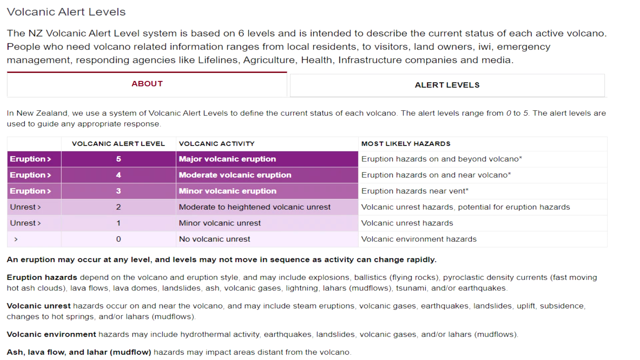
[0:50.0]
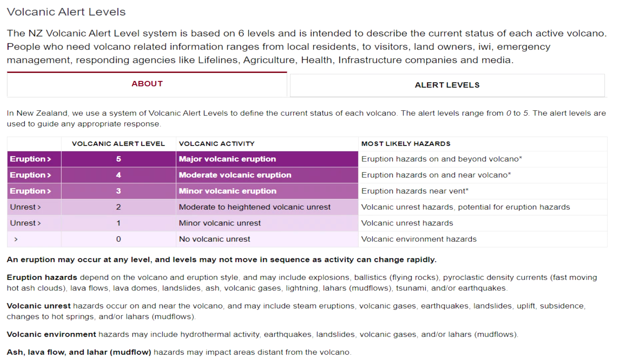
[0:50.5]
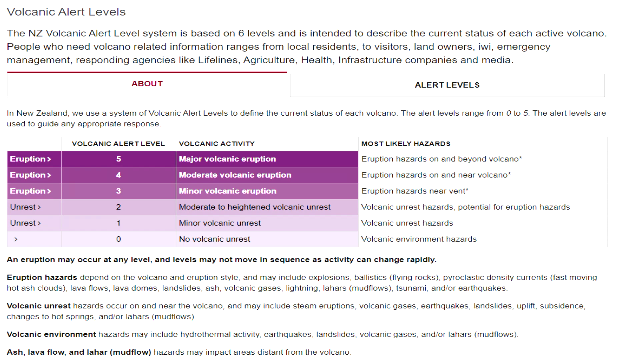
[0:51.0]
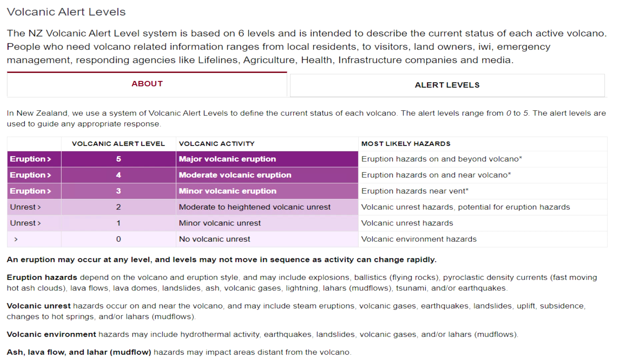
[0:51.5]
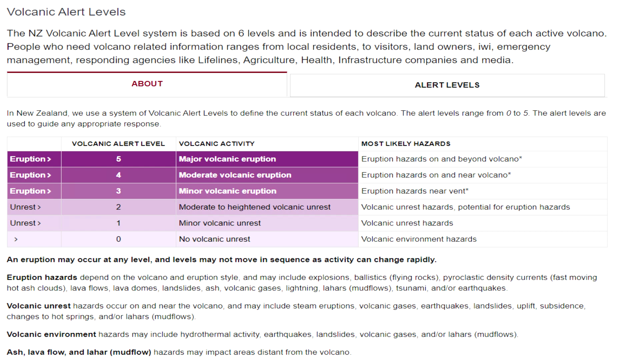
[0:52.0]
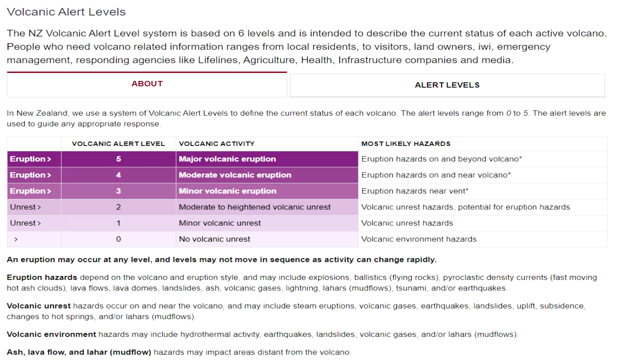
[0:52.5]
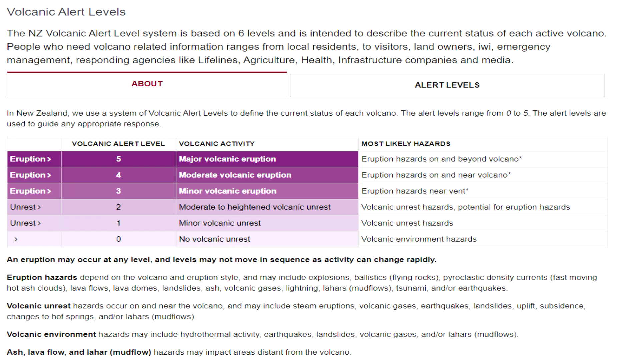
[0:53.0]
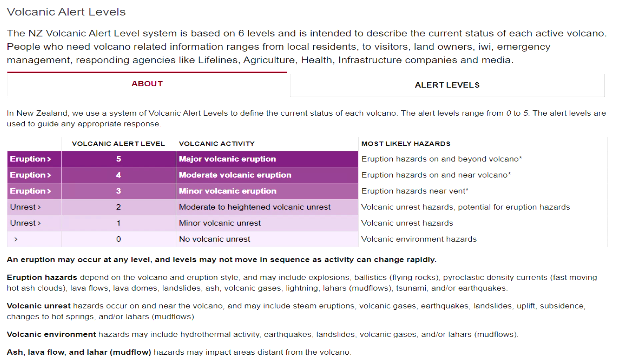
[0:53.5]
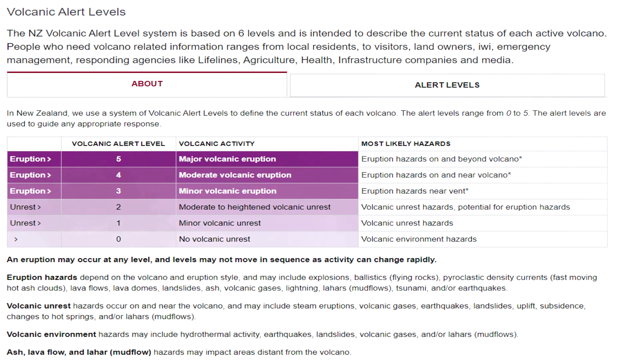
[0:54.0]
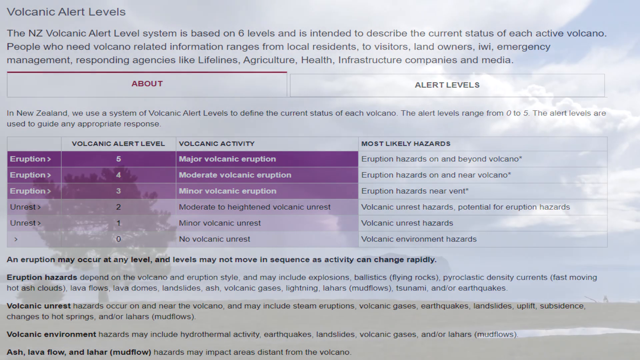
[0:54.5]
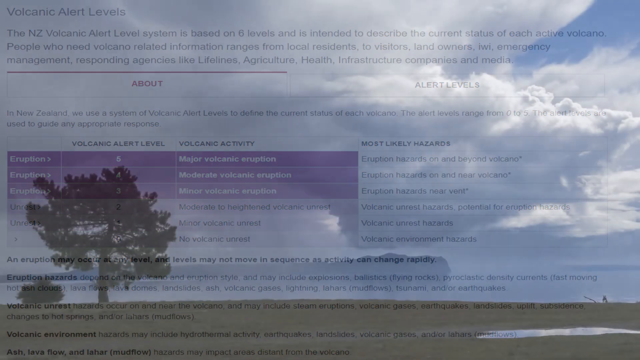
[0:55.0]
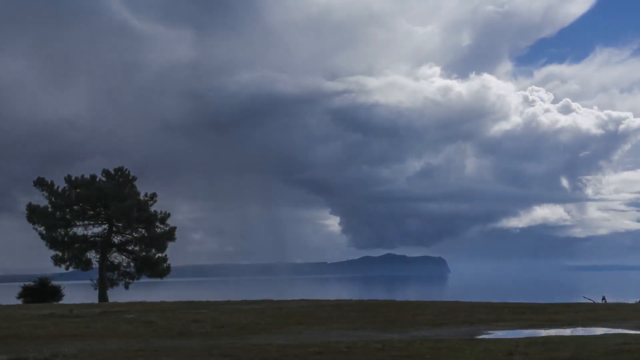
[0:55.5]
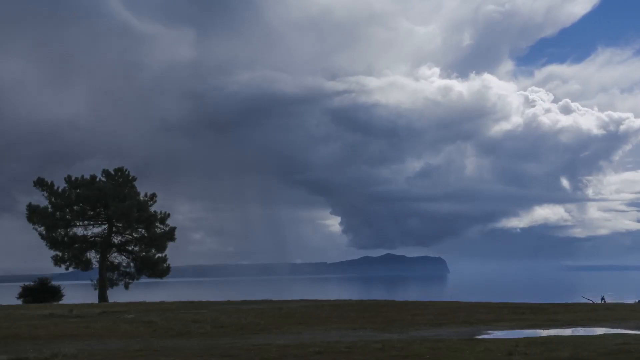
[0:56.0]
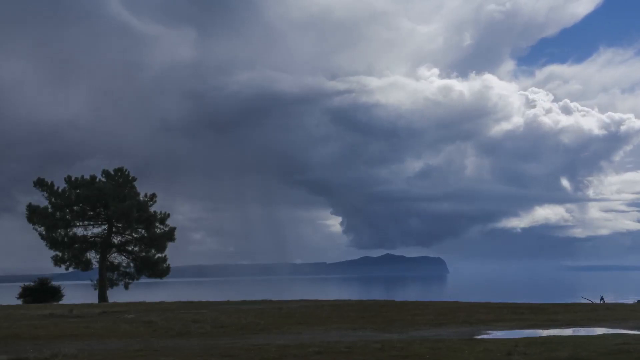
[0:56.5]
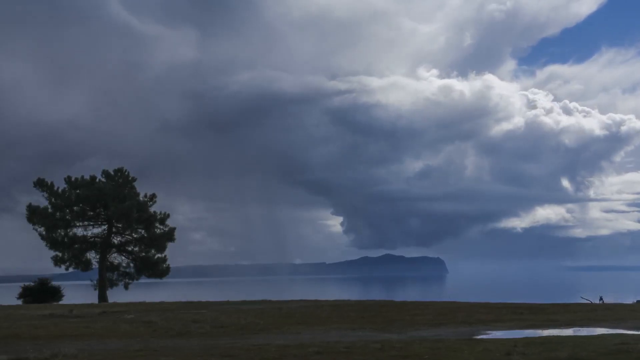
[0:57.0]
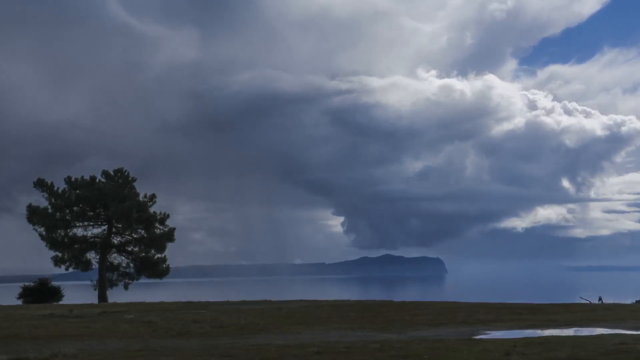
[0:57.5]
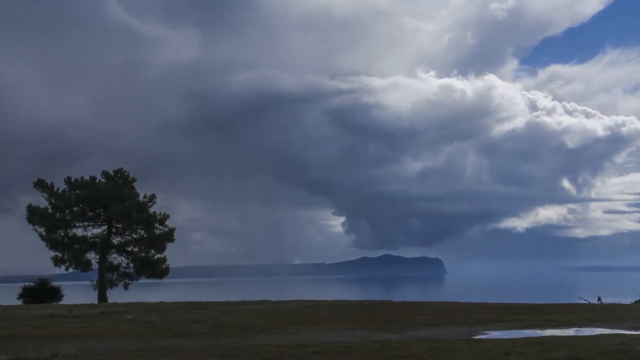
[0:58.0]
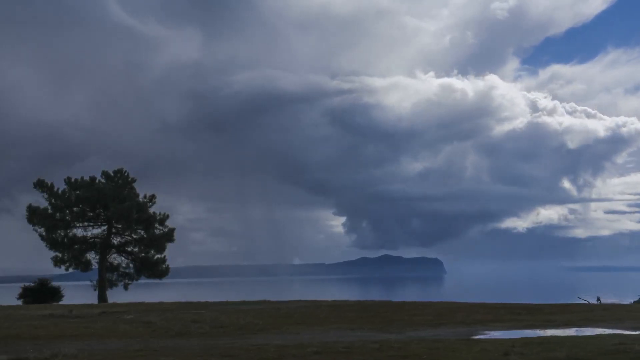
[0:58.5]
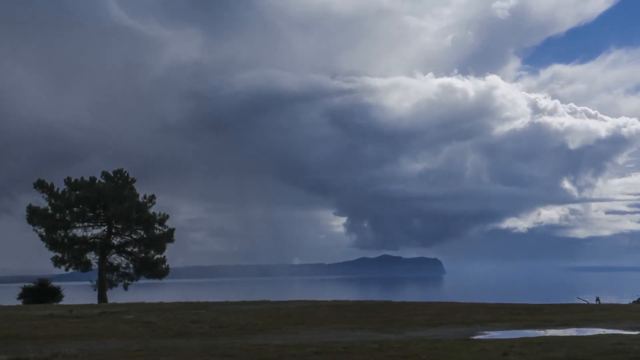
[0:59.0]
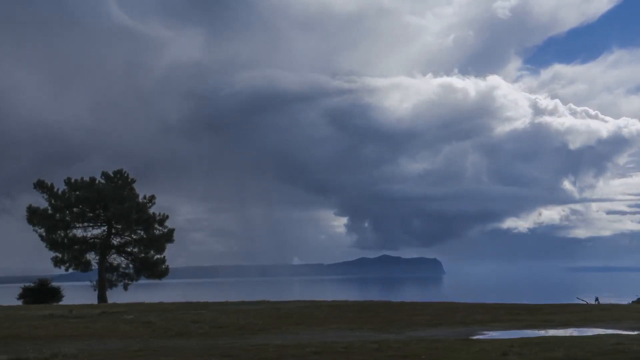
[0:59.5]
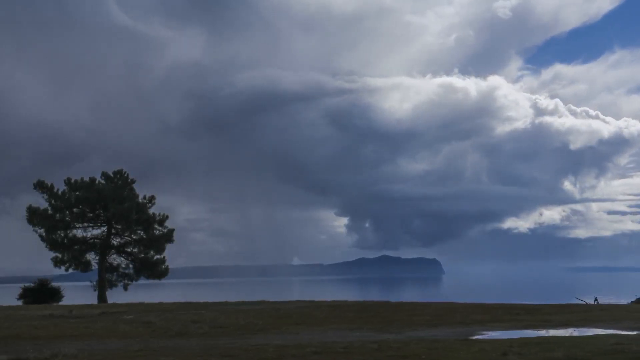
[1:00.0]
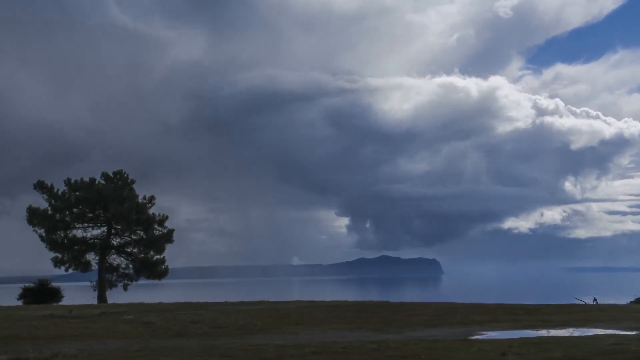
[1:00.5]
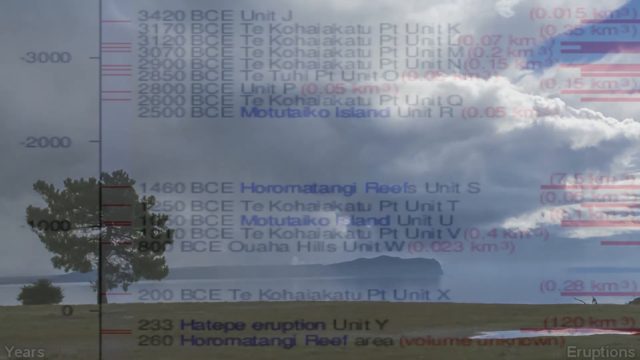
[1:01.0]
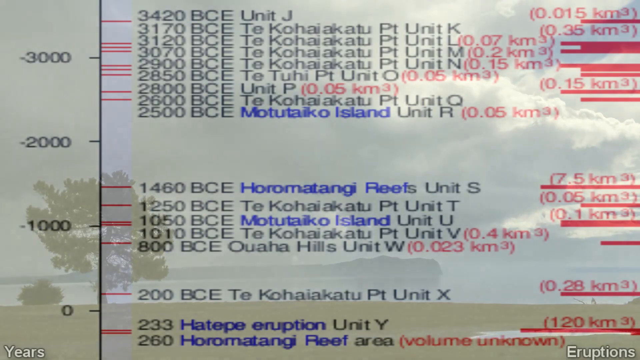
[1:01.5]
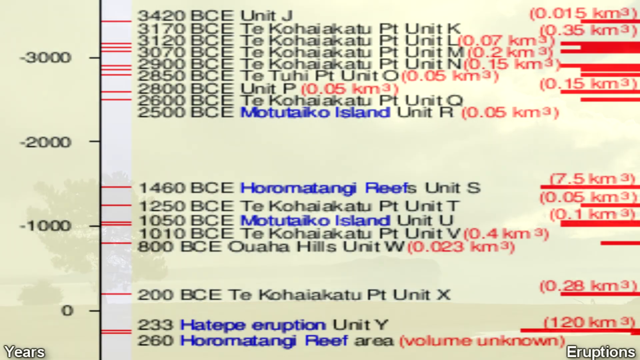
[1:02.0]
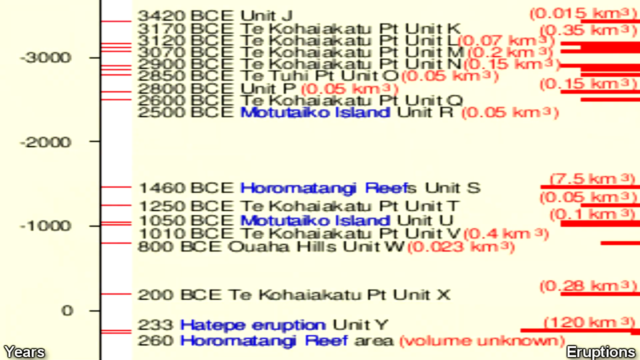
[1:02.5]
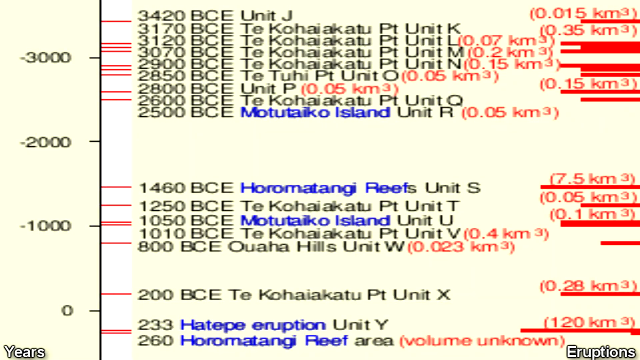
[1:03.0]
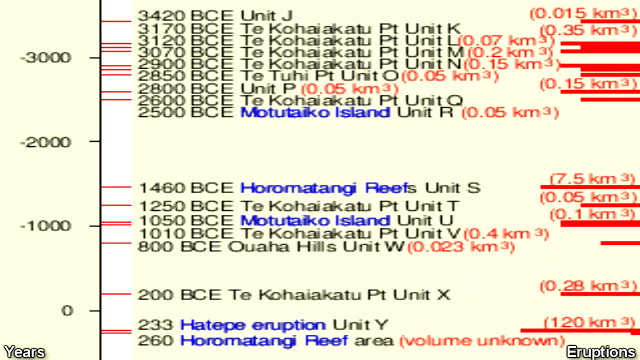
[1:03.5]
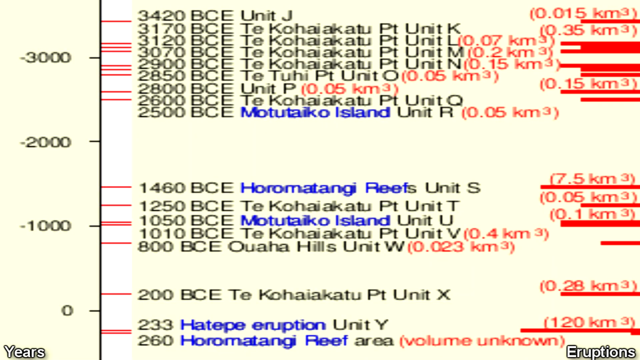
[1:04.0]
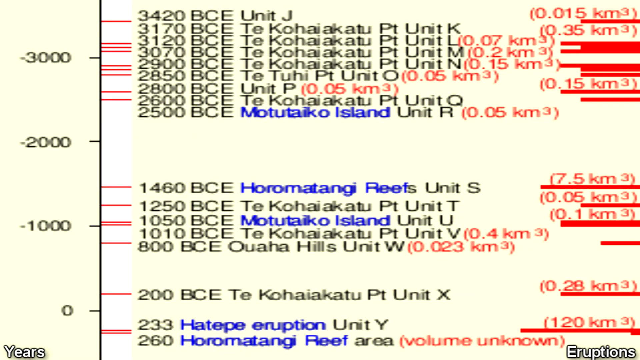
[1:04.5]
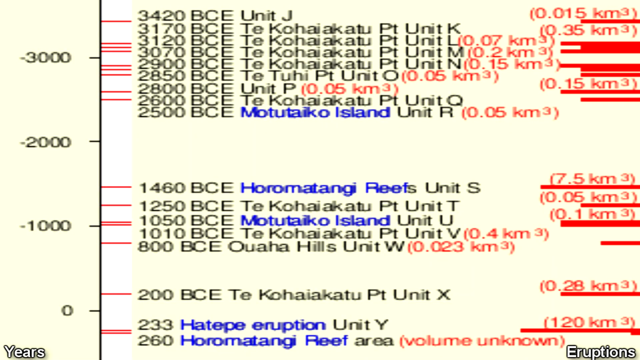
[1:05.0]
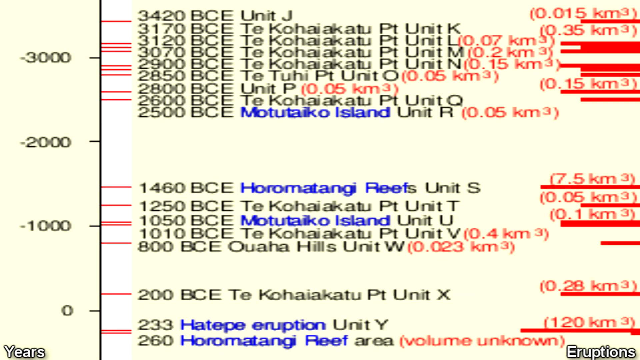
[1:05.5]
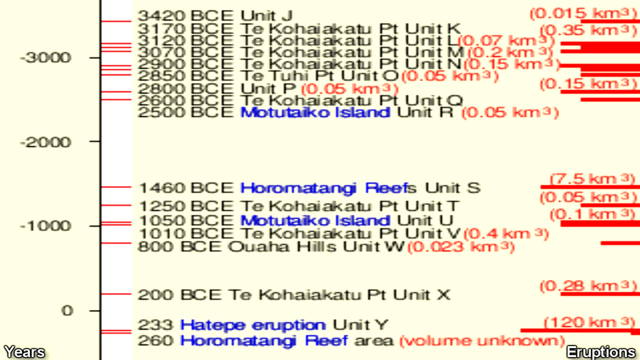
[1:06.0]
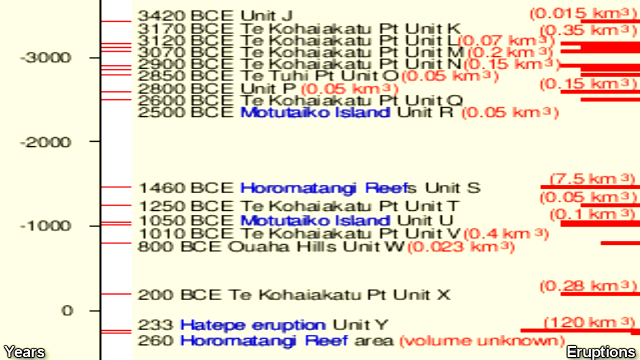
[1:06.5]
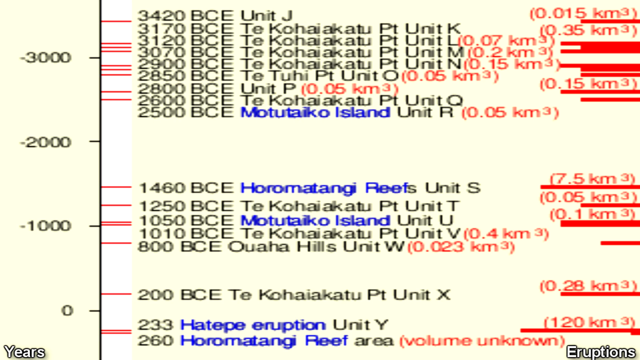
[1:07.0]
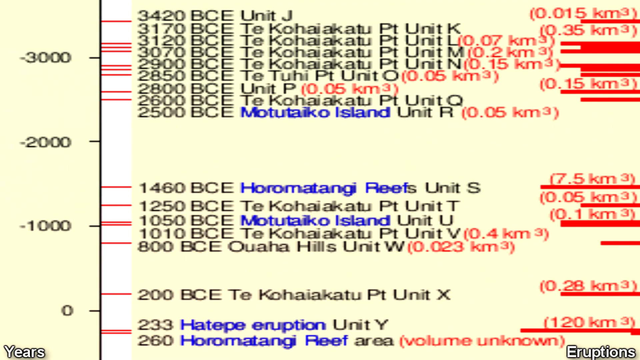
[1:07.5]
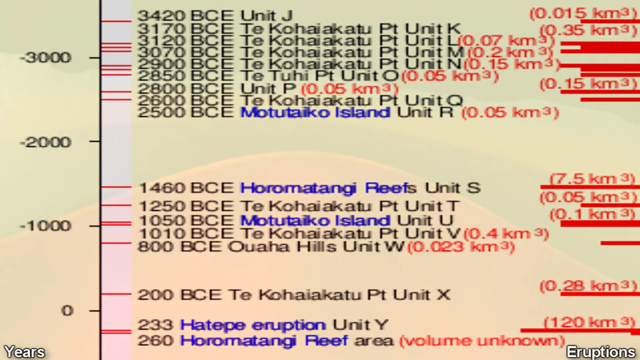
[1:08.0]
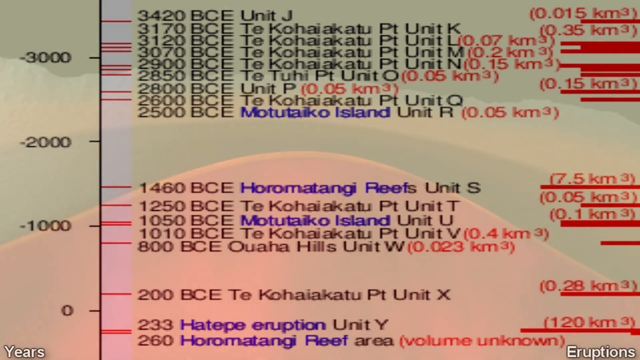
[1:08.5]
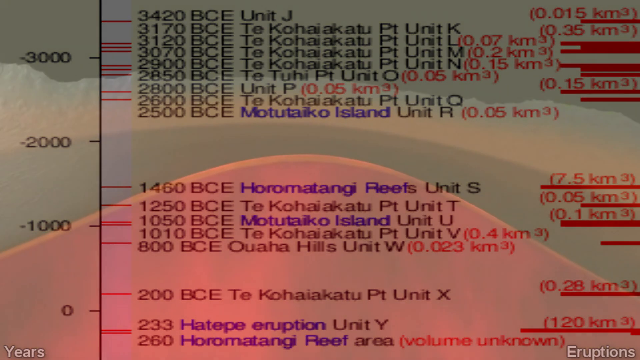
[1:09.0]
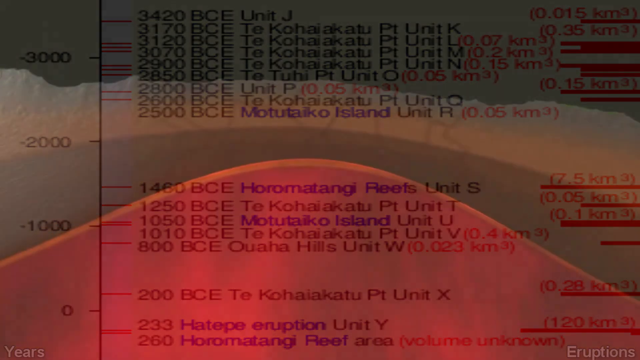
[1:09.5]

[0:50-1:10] The volcanic activity chart is shown, going from white, the lowest alert level at zero with no volcanic unrest, to five, a dark purple color indicating a major volcanic eruption. The video then transitions to a shot of what is presumably the volcano from afar. Clouds have rolled in and darkened the sky. A tree on land is in view, and it looks like the camera is on a cliff looking out towards the volcano over the ocean, which is still and not moving. It looks to be a day with no wind apart from the clouds rolling in.